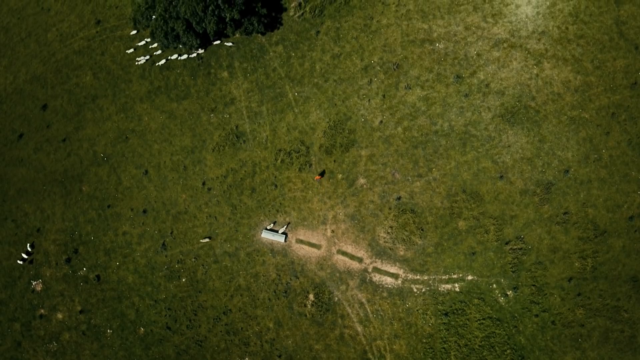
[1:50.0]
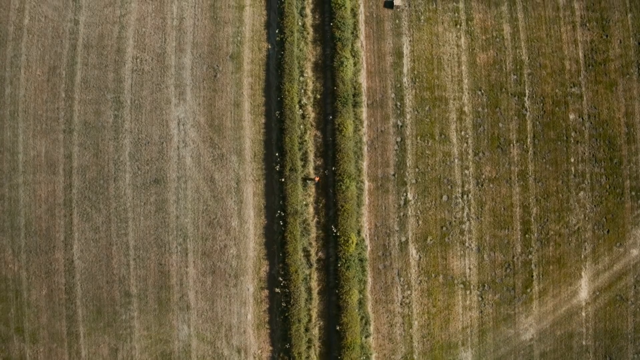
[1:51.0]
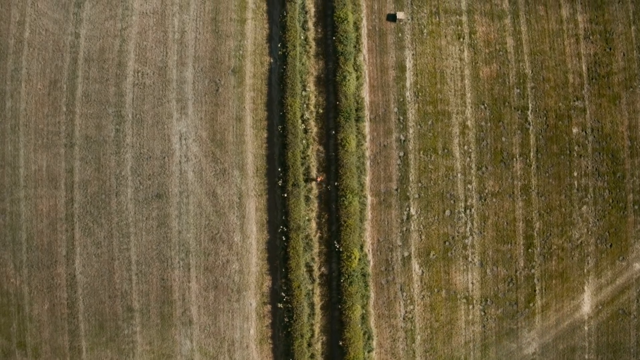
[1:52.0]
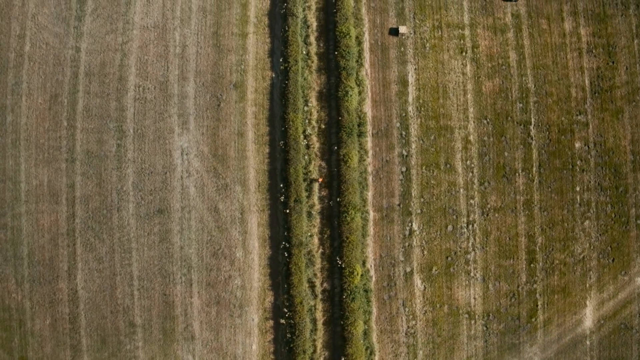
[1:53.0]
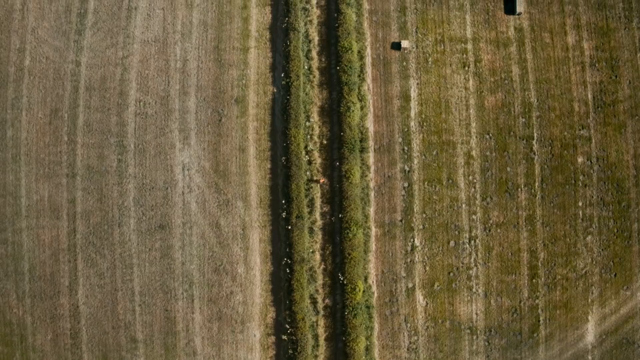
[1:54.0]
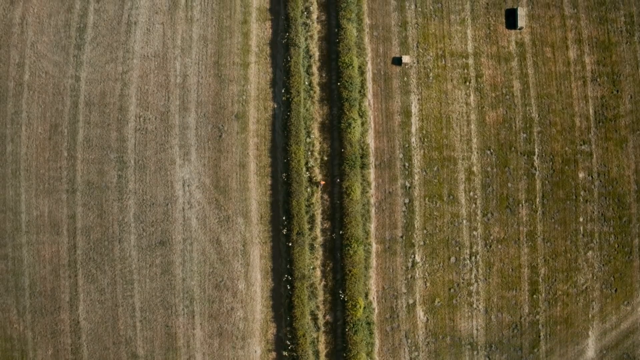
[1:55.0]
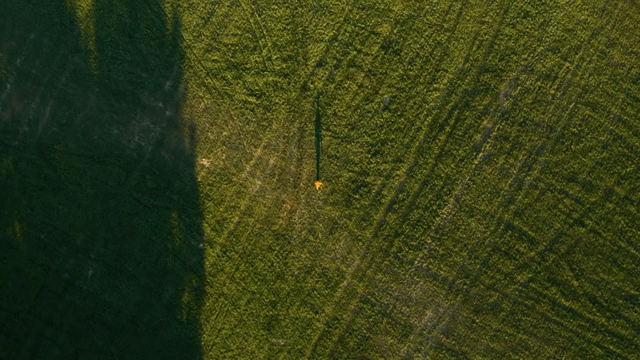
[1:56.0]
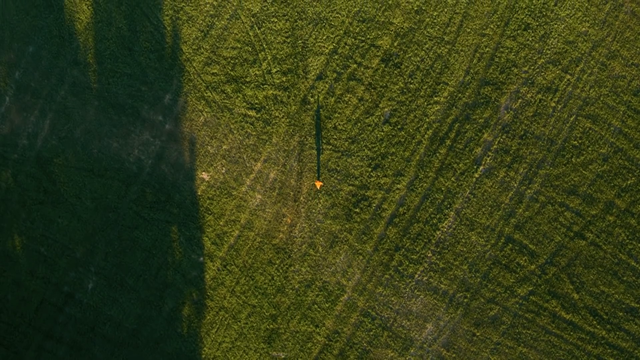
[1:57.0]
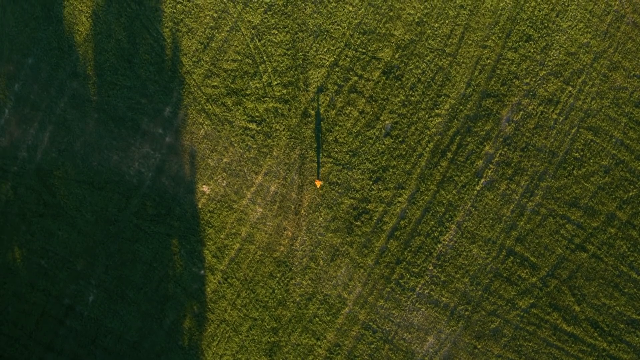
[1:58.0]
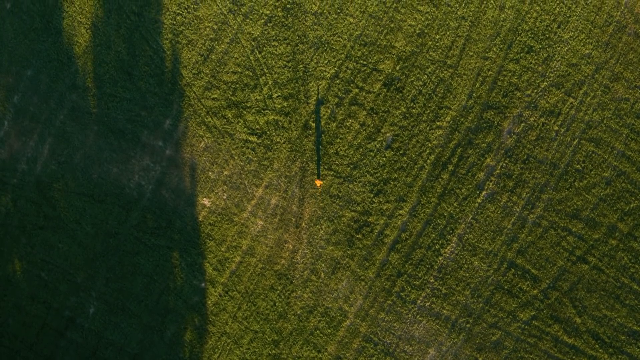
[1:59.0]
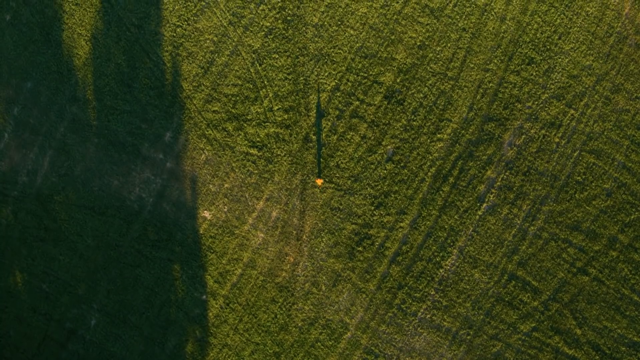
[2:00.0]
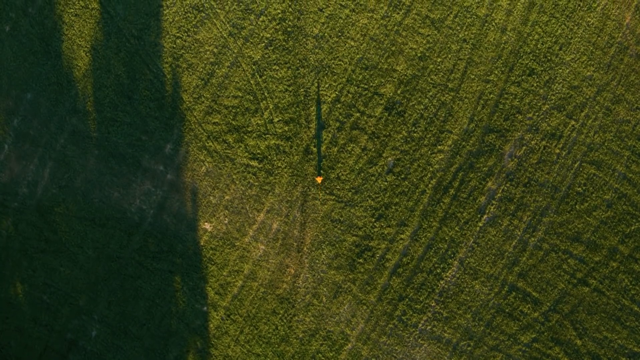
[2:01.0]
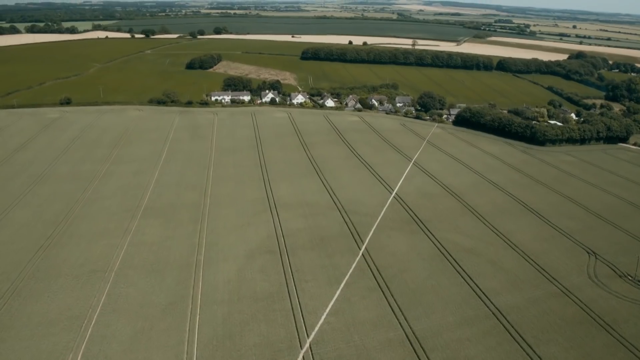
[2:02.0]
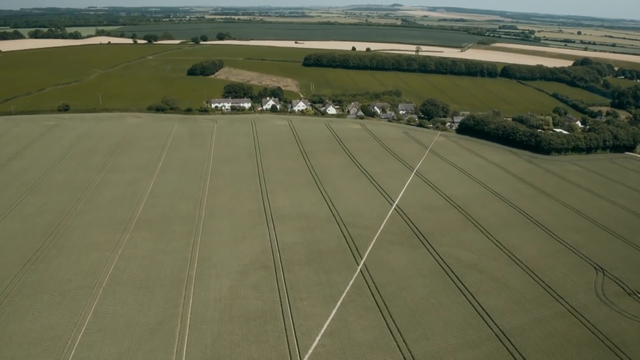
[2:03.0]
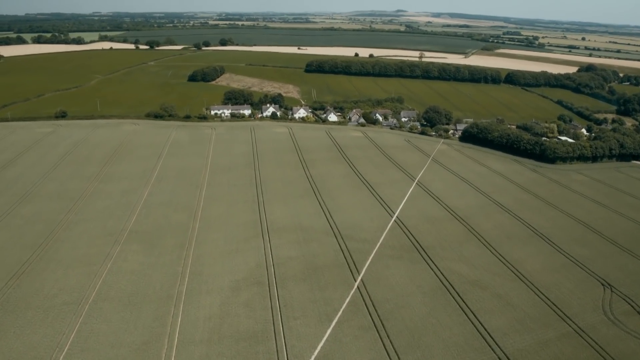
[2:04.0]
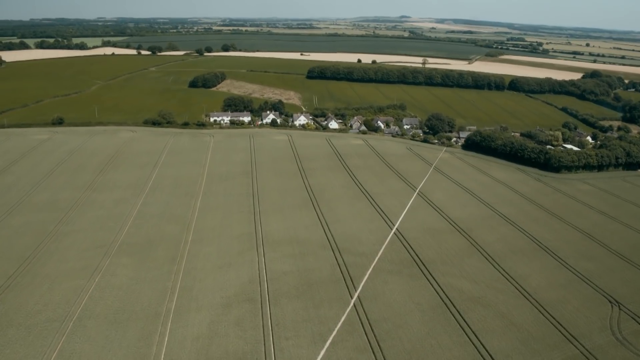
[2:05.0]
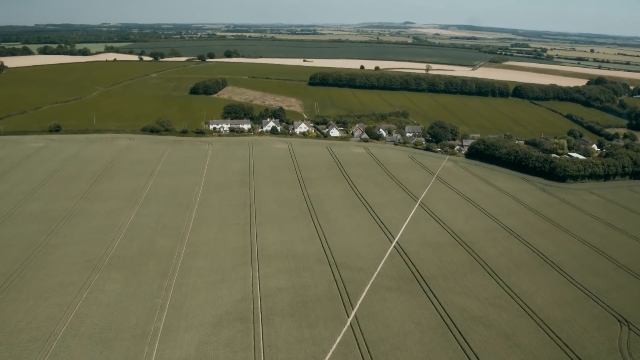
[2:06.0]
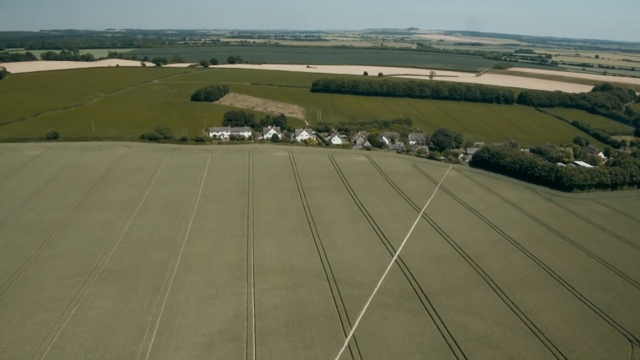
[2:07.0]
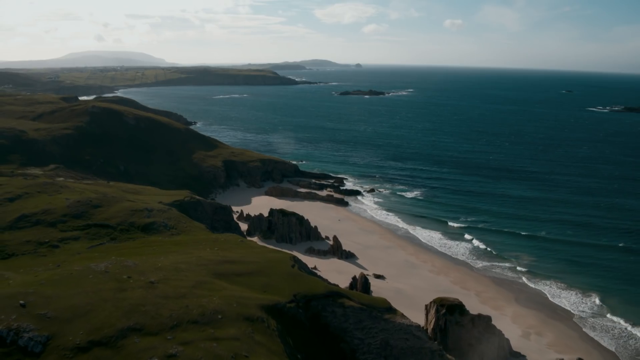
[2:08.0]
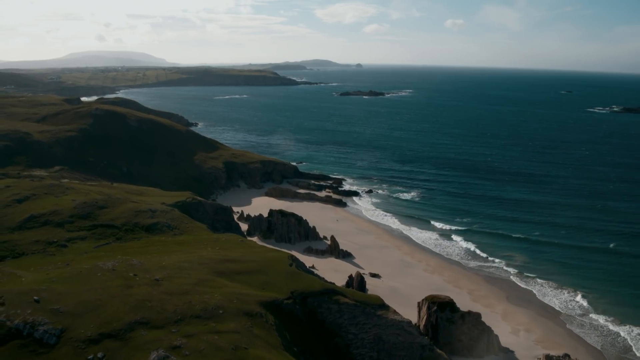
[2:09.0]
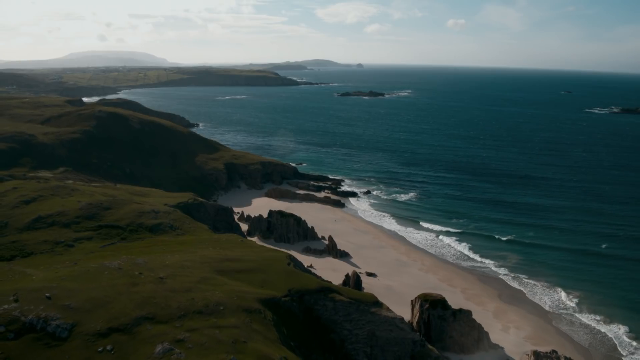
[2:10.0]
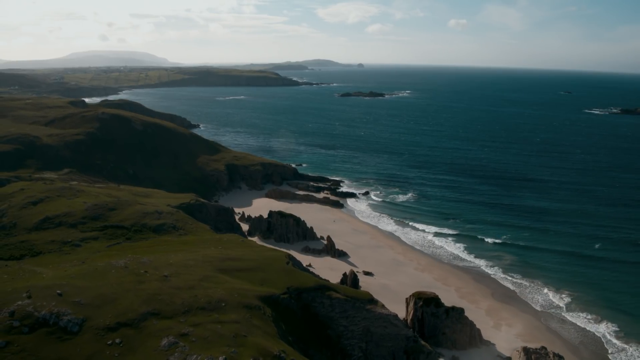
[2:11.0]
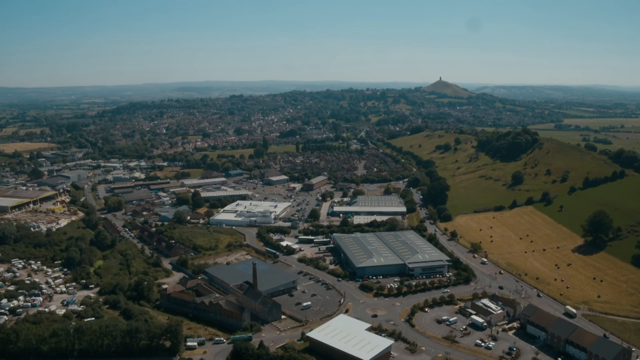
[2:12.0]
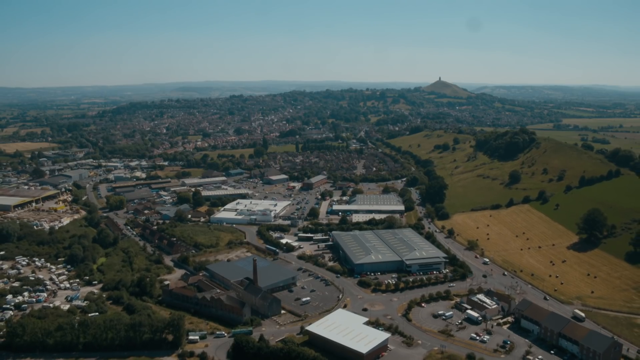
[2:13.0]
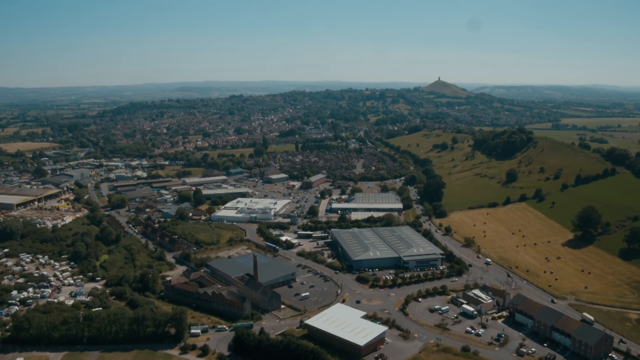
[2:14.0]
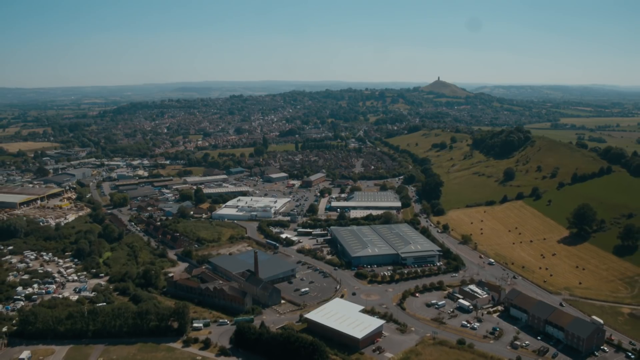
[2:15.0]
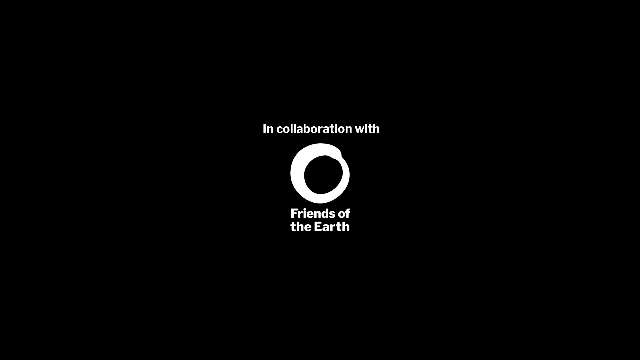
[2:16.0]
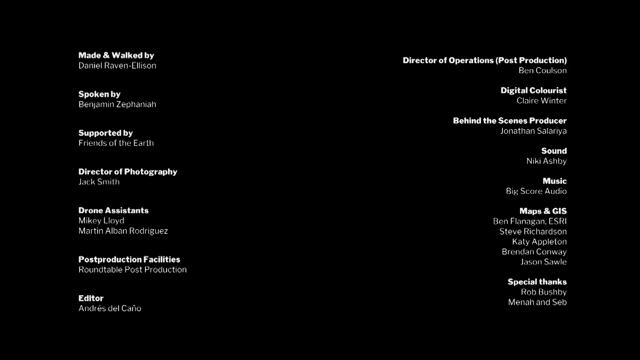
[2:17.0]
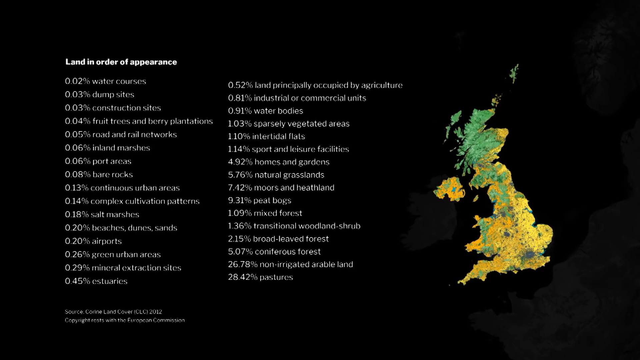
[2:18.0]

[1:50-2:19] In an aerial shot of different landscapes, buildings with brown and black roofs are built very close together, next to a very gray and white road with many cars of different colors parked in a row. It cuts to a person swimming in a very large body of water, a dark blue-green ocean; the camera is so high that the person's gender is hard to see. Next is an open meadow with white rocks, where the person moves at a rapid pace, as if jogging across it. It quickly switches to a desert landscape, and then to what looks like maybe a football field, green with U-shaped yellow bars. It then goes into a city scene where a person moves on an asphalt road among different houses with hip-style roofs.